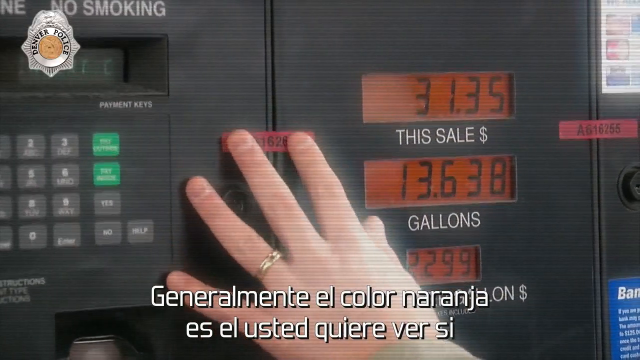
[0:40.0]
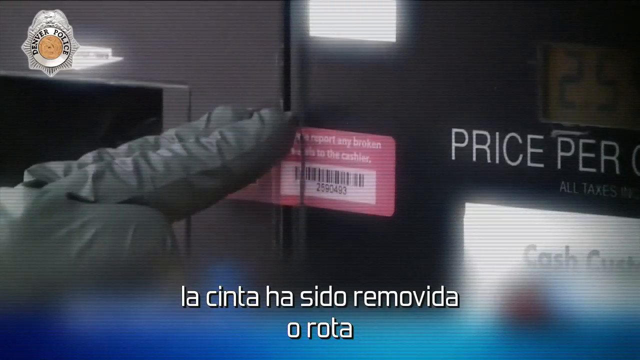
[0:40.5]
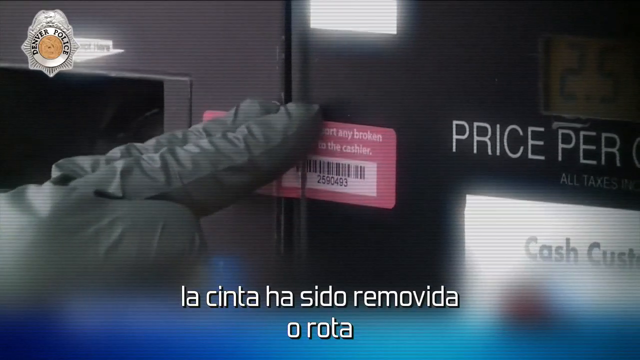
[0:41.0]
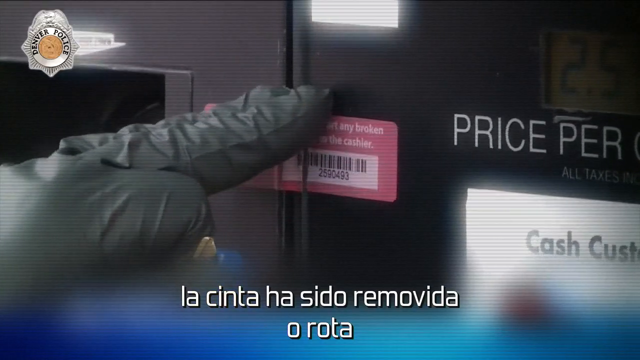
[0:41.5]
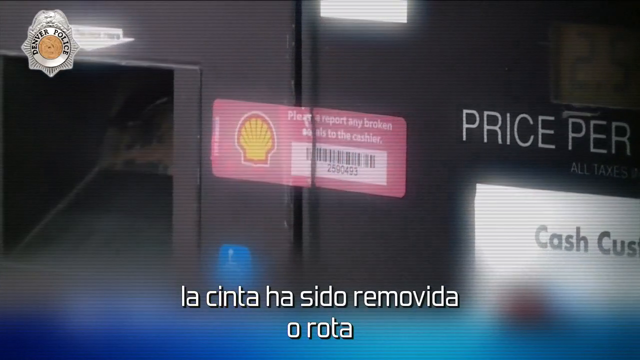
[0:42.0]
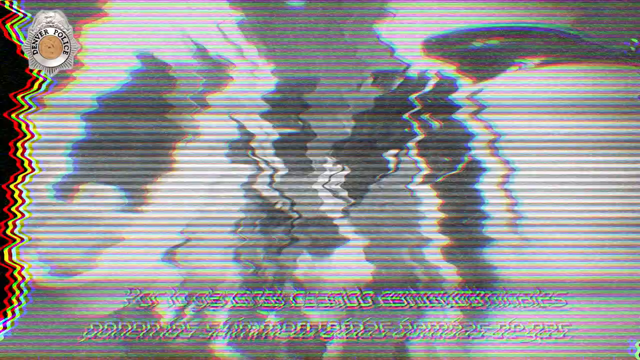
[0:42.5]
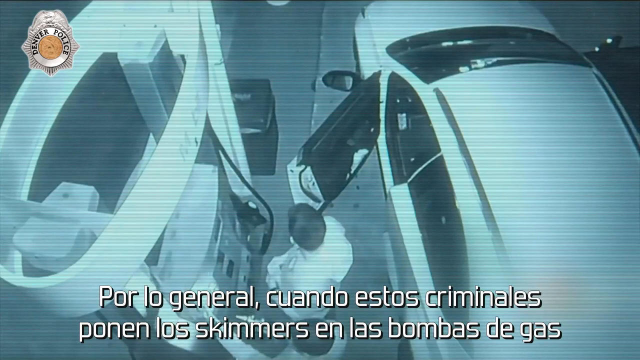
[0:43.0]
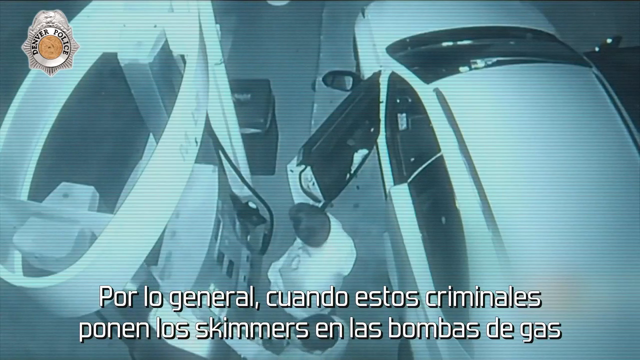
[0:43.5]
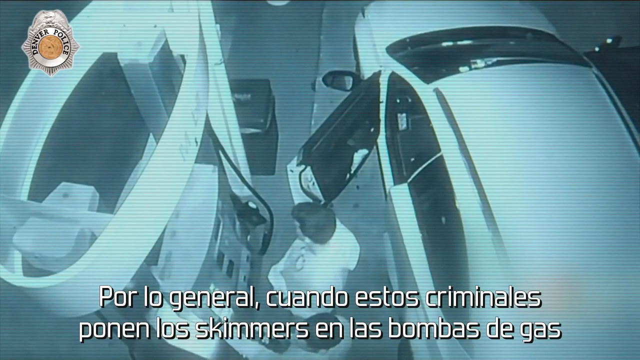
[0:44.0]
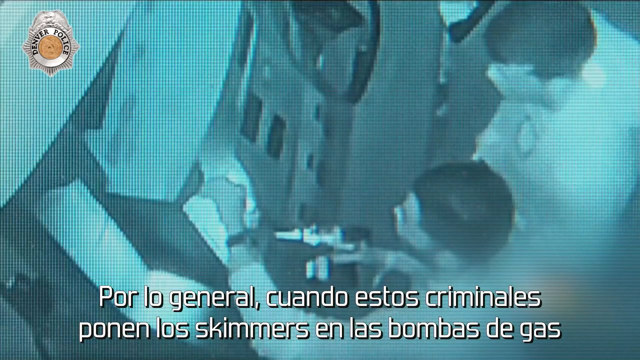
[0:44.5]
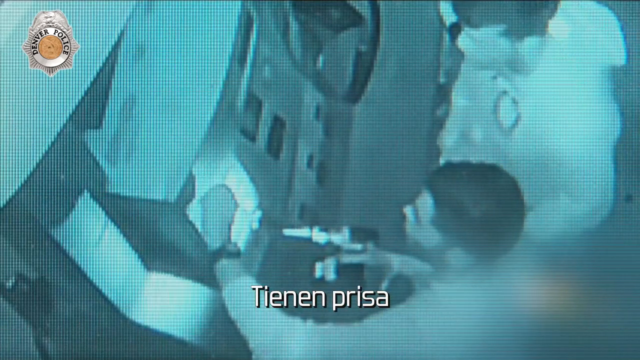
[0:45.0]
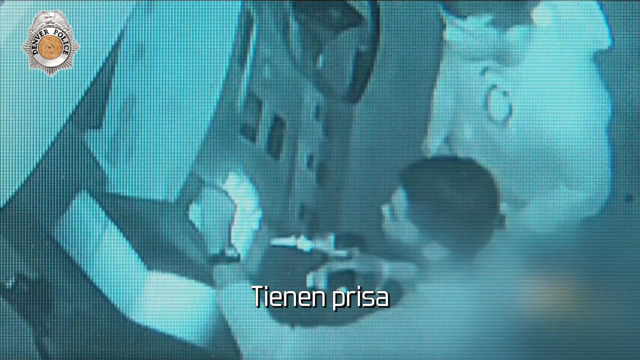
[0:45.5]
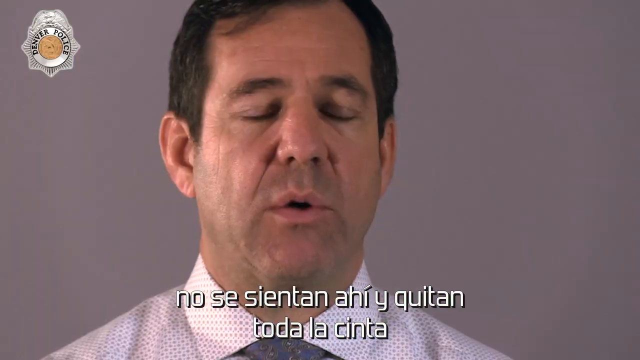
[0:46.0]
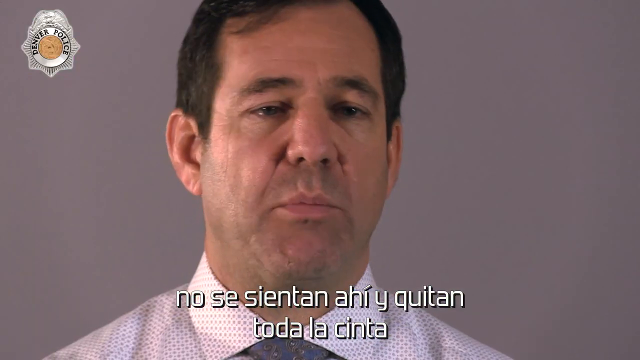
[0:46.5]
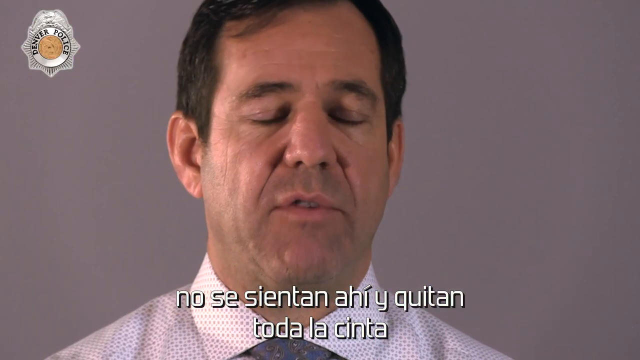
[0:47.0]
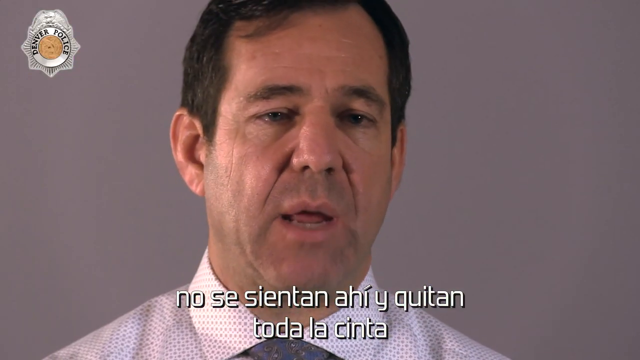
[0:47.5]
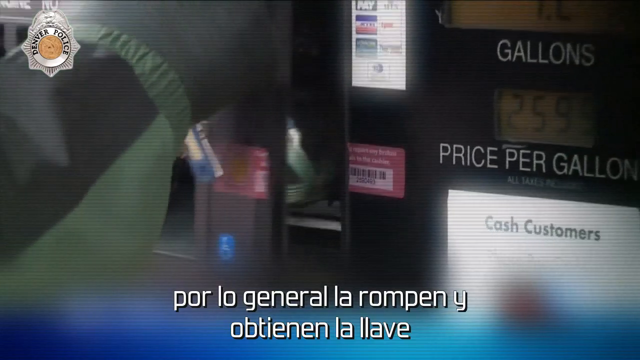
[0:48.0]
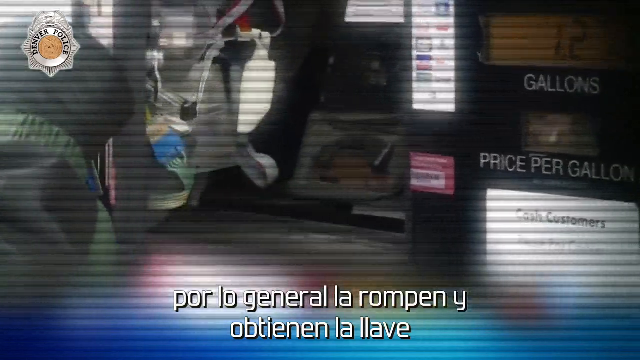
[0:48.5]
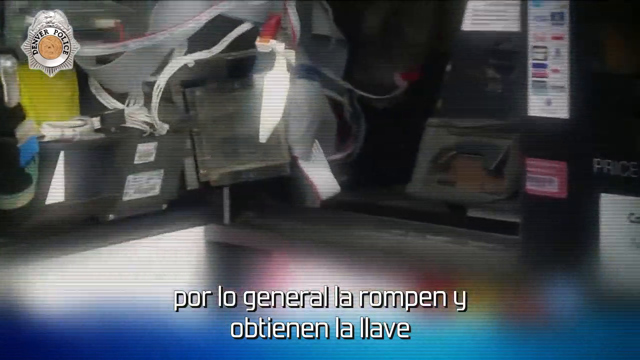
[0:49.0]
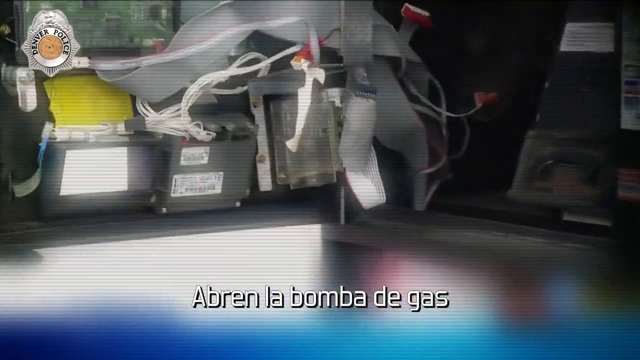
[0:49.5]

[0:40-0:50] At a gas station, the man presses a Shell seal, with white letters on a pink background, onto the machine. Then, at night, someone at a gas pump appears to be getting gas but is breaking into the machine to put a skimmer in. There are two men with dark hair, one with a beard and one clean-shaven; one has a drill, and they try to open the machine to install a skimmer. The video cuts back to the middle-aged white man in a plain room, talking about skimming again. The machine is then shown opening again, with its inside visible.